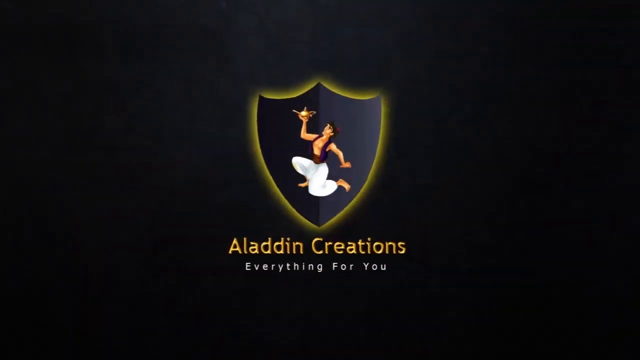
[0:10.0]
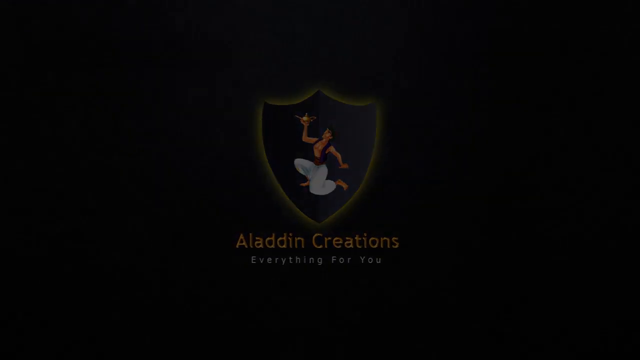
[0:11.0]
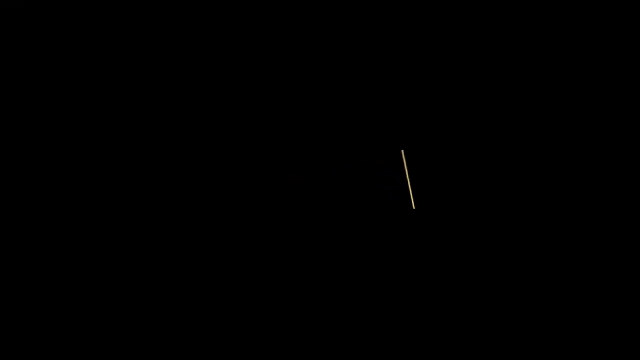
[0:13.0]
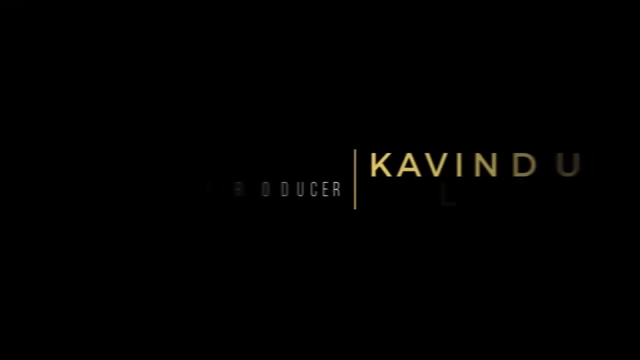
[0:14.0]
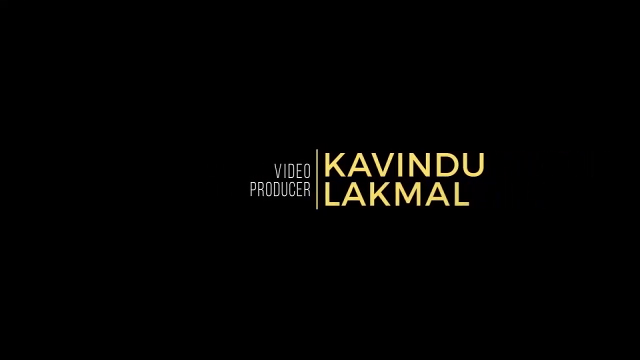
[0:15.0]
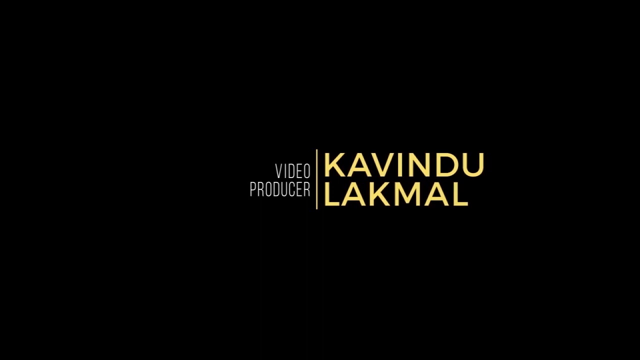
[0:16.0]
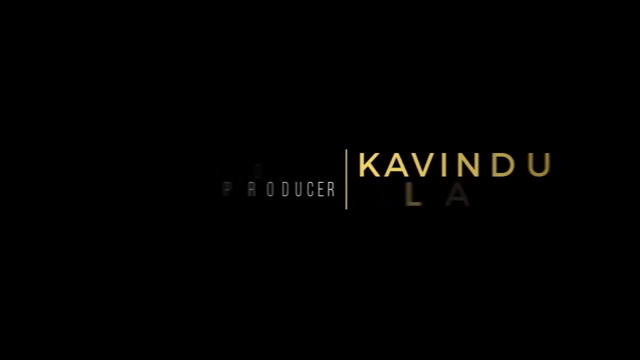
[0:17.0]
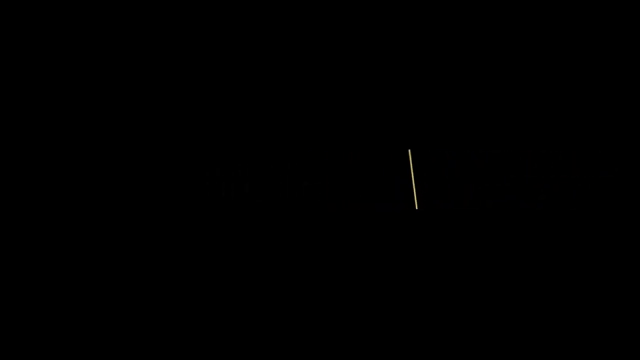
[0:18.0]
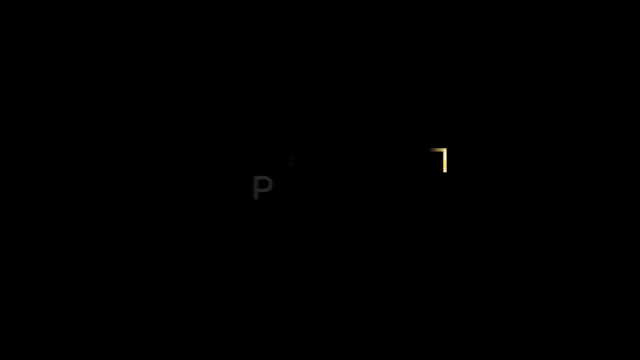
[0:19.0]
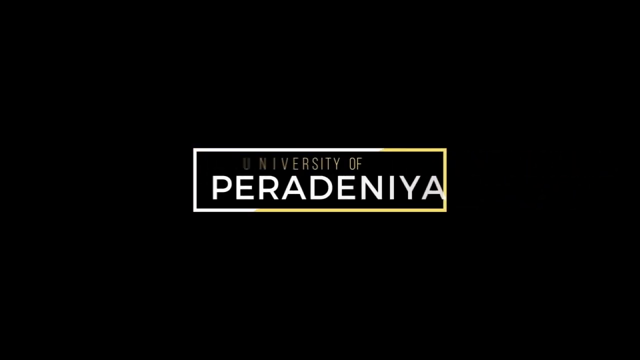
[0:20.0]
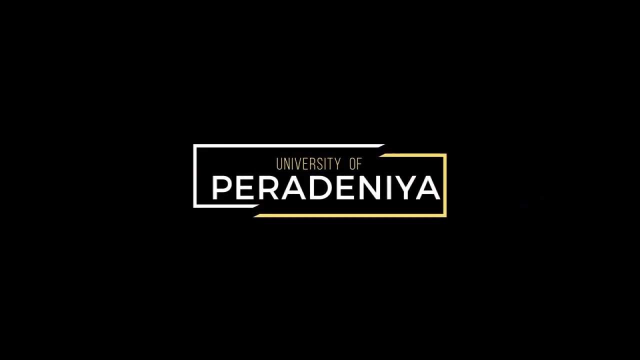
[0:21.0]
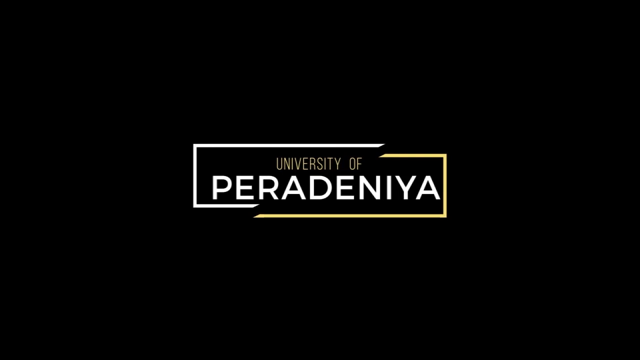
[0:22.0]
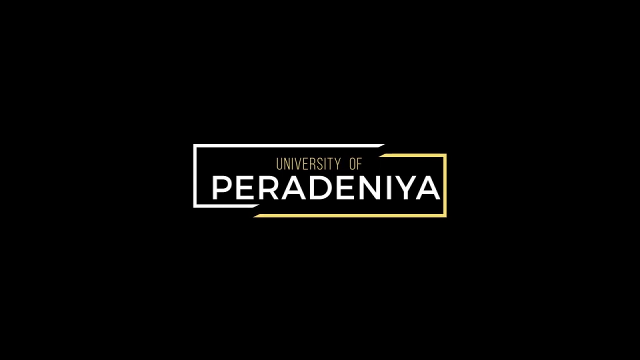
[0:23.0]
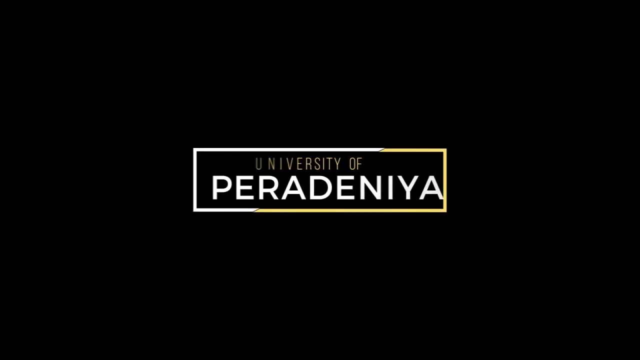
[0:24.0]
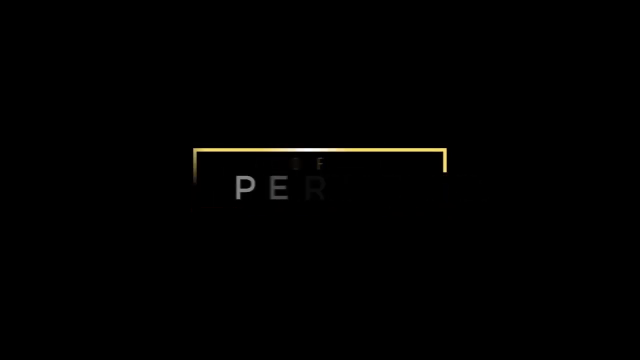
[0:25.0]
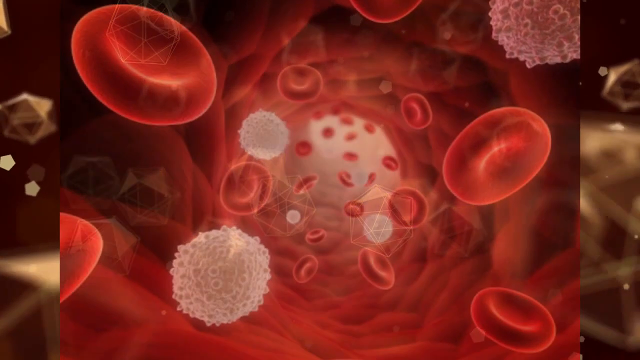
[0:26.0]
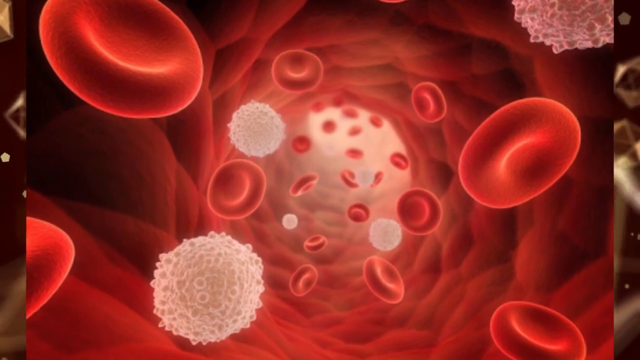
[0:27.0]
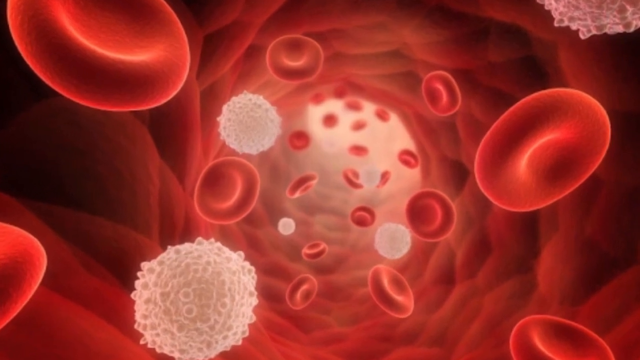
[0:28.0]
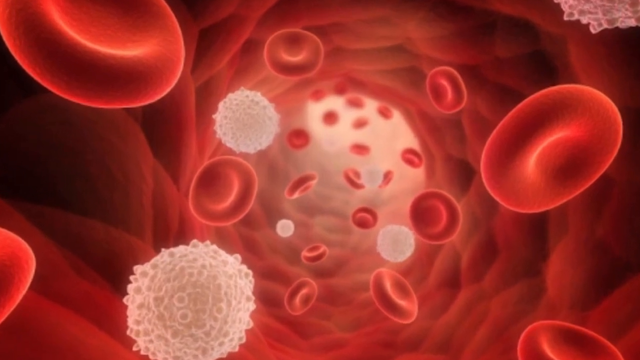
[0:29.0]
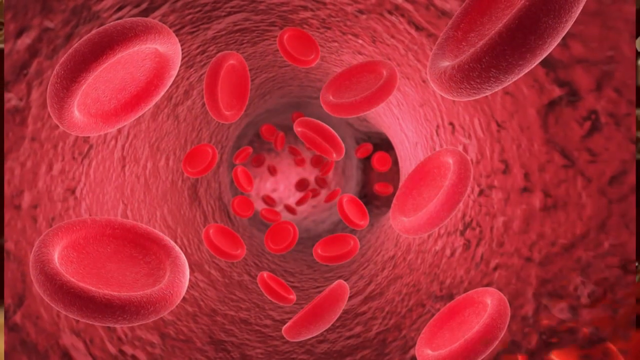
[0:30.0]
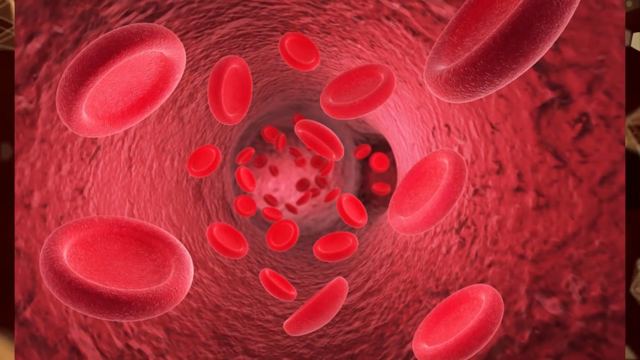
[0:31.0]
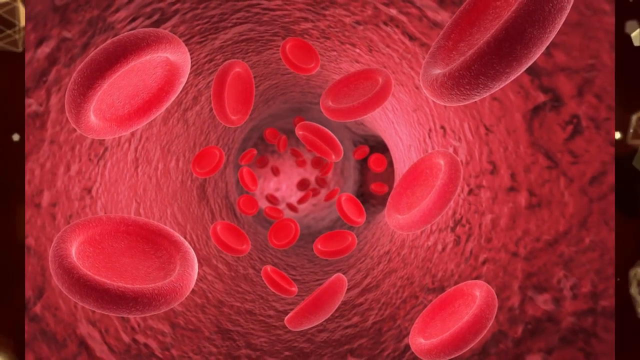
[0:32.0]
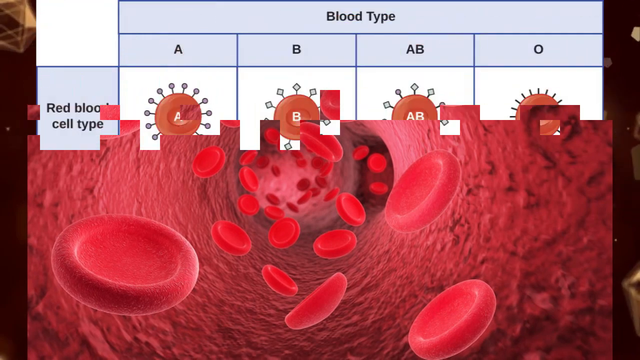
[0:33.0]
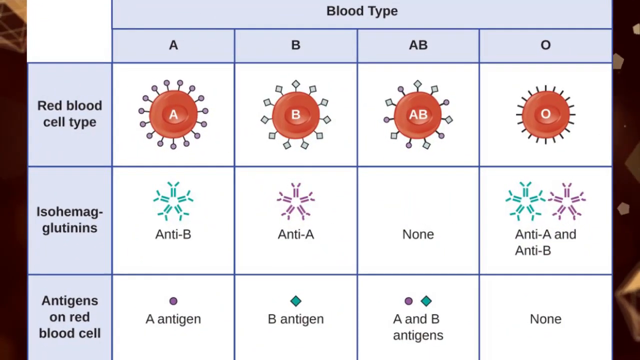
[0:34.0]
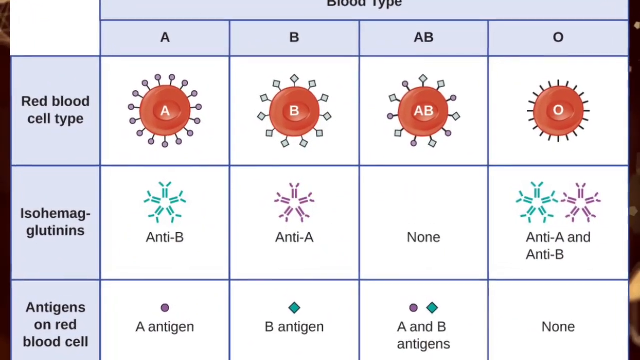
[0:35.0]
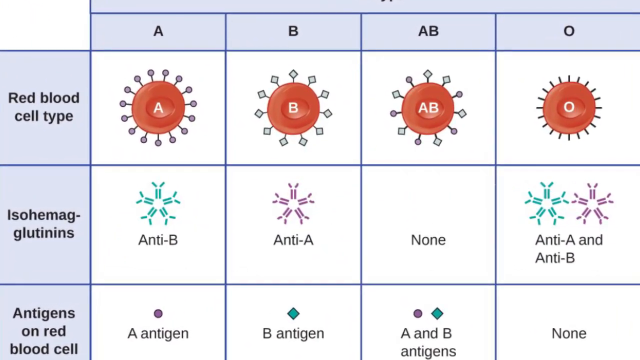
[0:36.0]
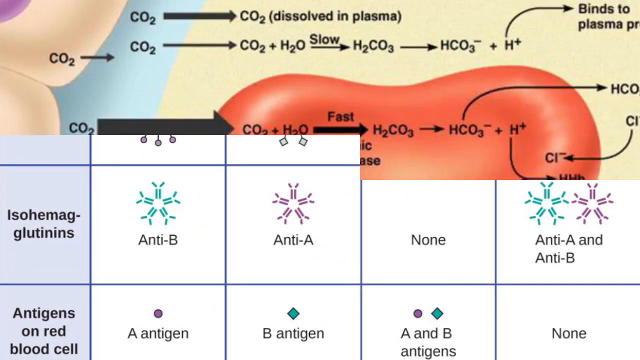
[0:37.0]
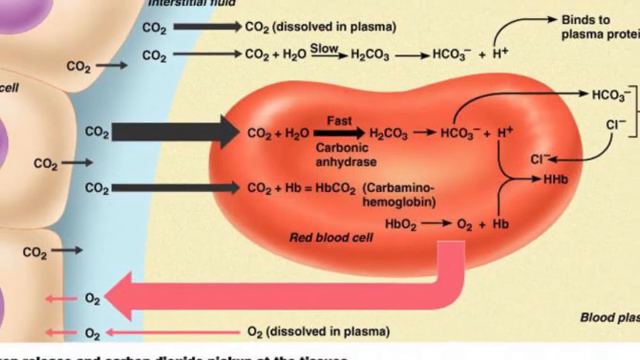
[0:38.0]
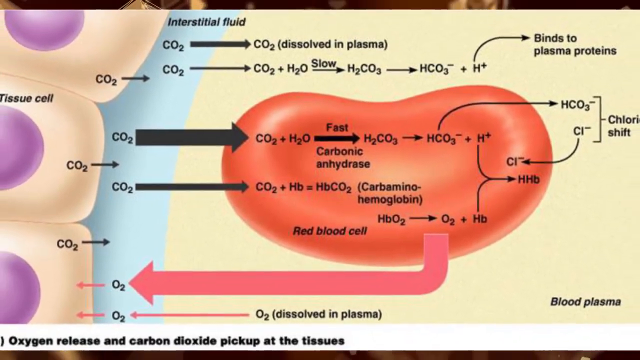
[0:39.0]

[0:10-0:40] The logo reads "Aladdin Creations, everything for you" and is a blue shield with an image of Aladdin, the Disney character, holding a genie lamp and wearing his movie clothes. The image disappears and is replaced by text reading "Video Producer Kavindu Lakmal". Those letters disappear and new text appears stating that this is made by the University of Peradenya. That text disappears too, and images of what seem to be blood cells follow: many different images, specifically of red blood cells. A table then shows different cell types and how each of them differs.